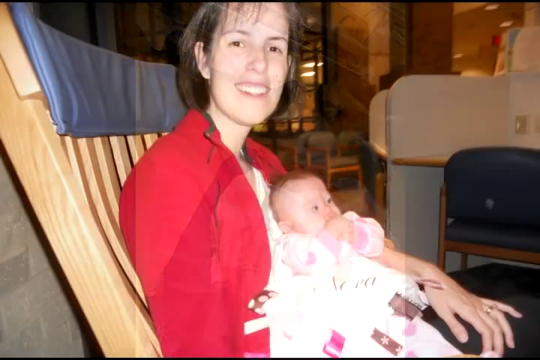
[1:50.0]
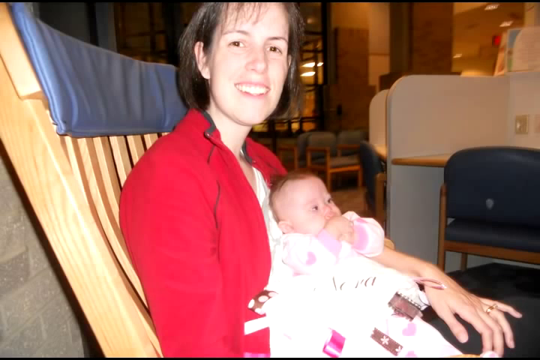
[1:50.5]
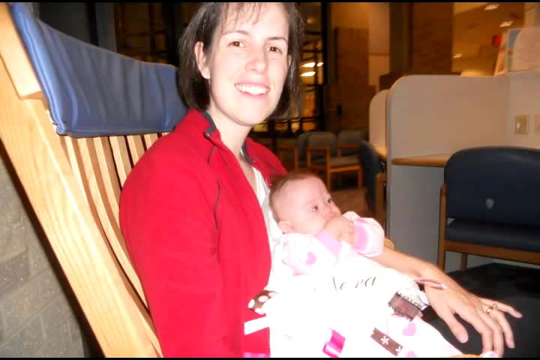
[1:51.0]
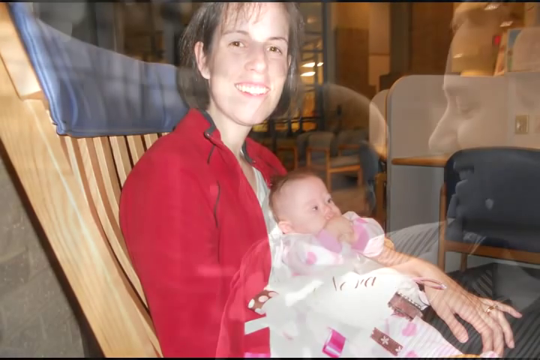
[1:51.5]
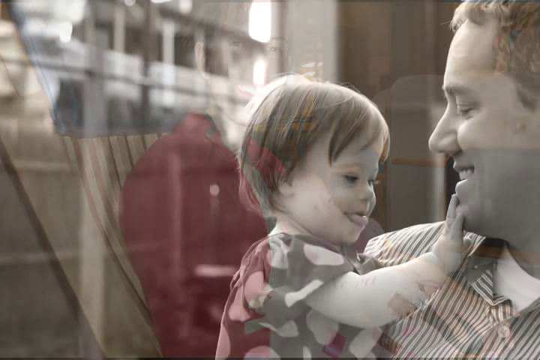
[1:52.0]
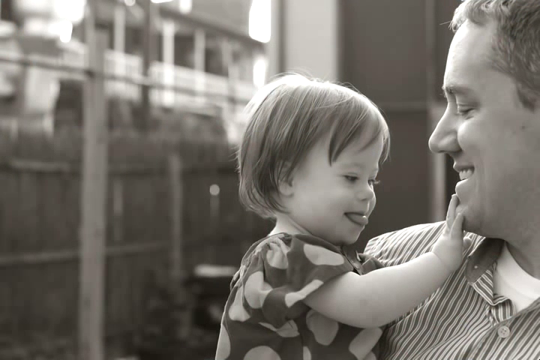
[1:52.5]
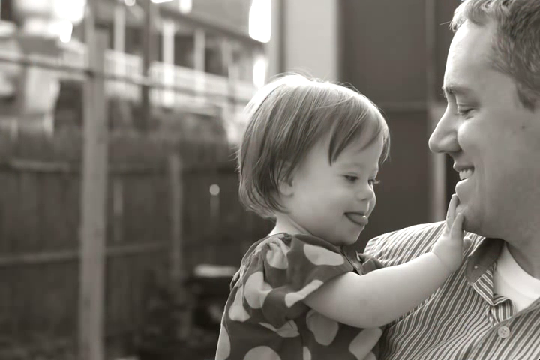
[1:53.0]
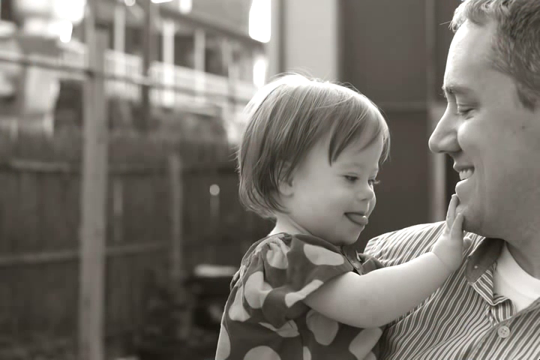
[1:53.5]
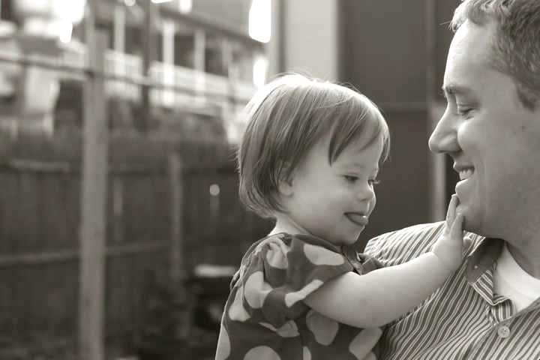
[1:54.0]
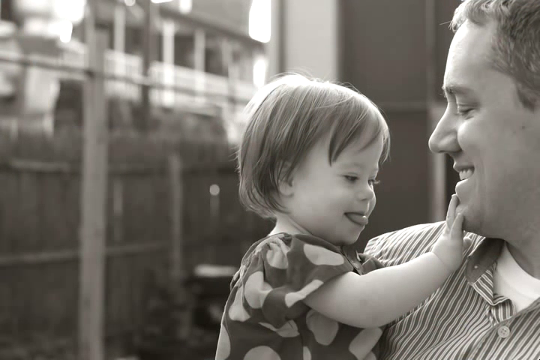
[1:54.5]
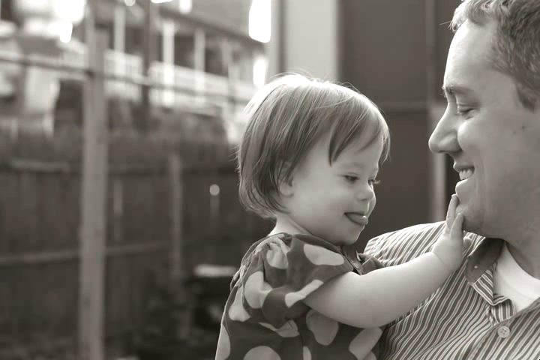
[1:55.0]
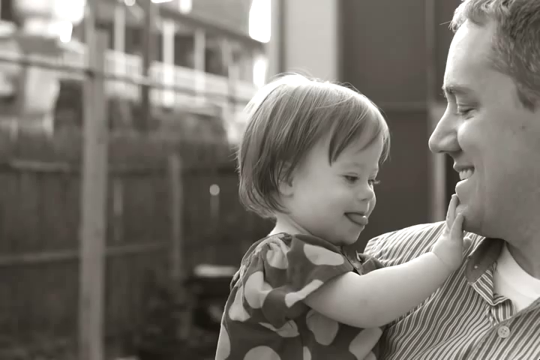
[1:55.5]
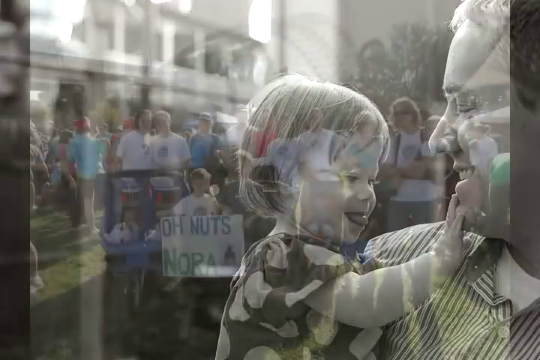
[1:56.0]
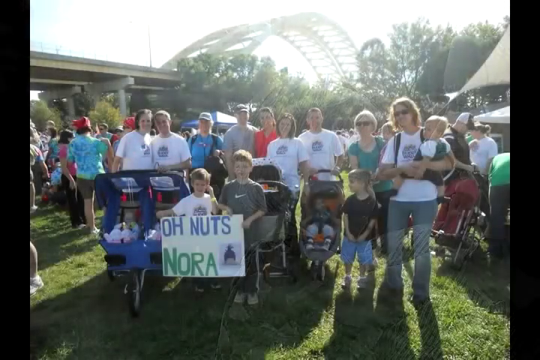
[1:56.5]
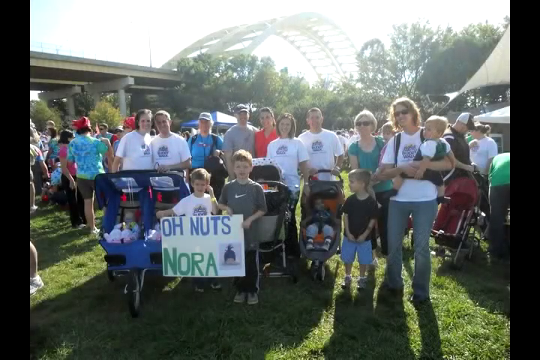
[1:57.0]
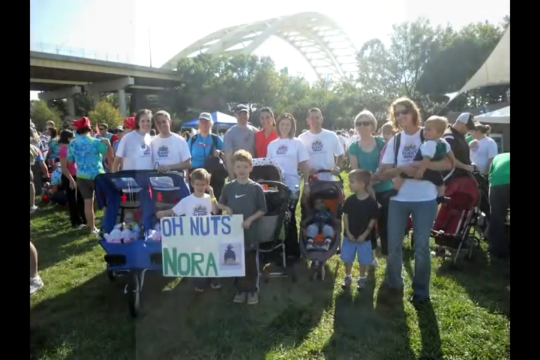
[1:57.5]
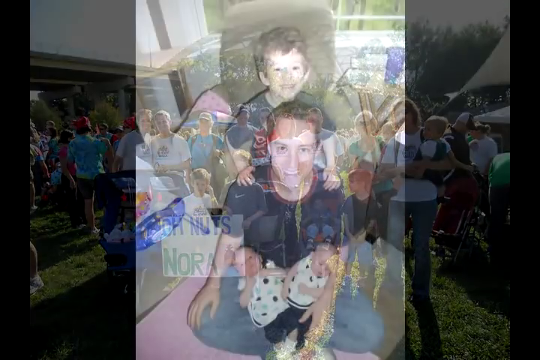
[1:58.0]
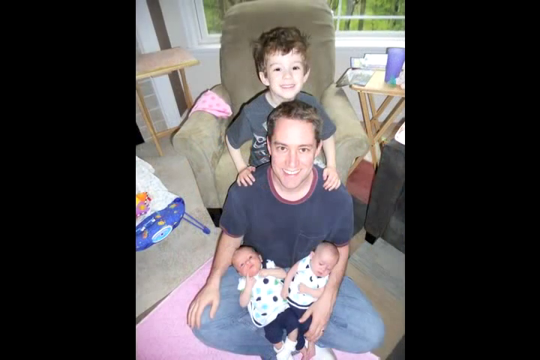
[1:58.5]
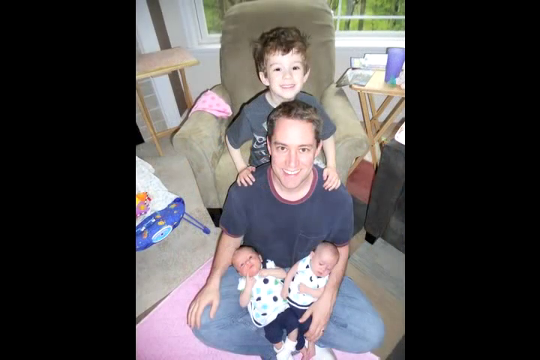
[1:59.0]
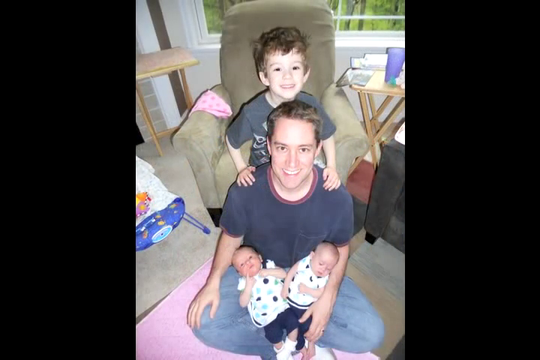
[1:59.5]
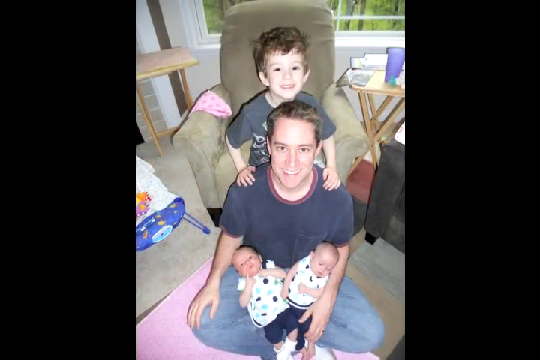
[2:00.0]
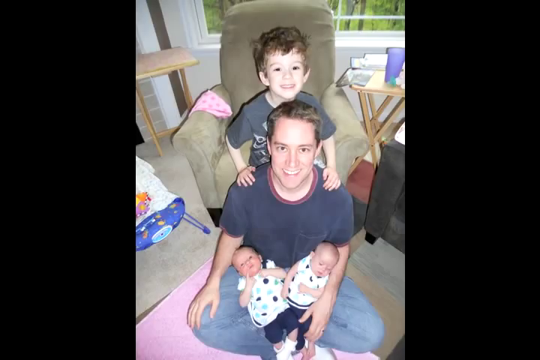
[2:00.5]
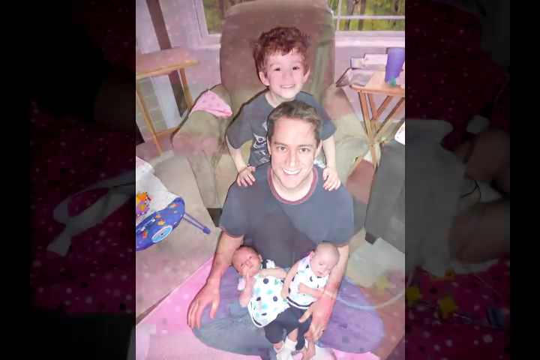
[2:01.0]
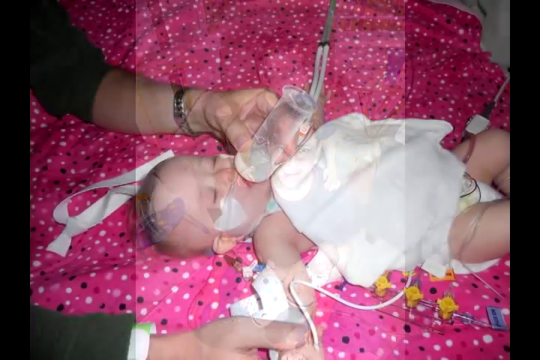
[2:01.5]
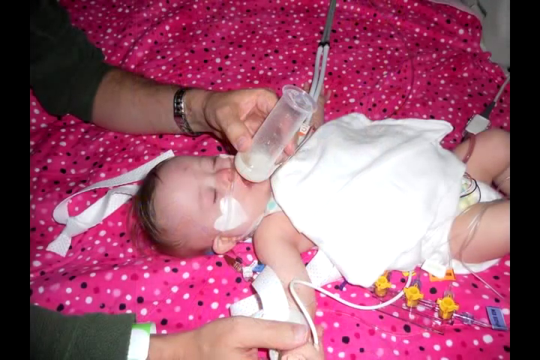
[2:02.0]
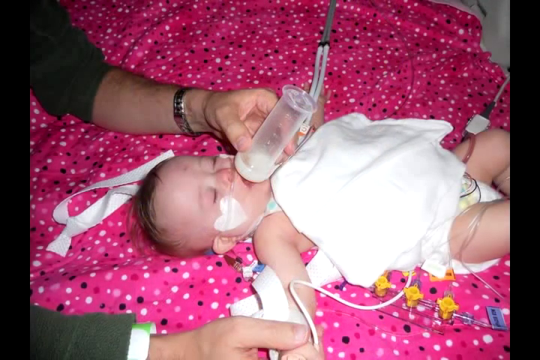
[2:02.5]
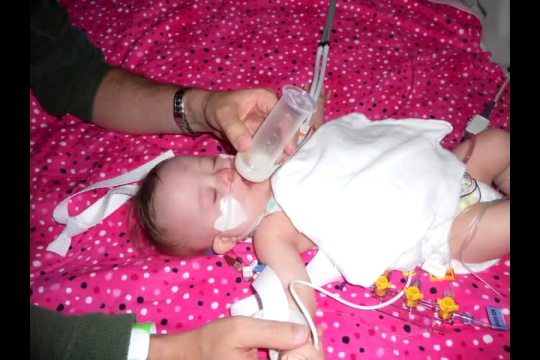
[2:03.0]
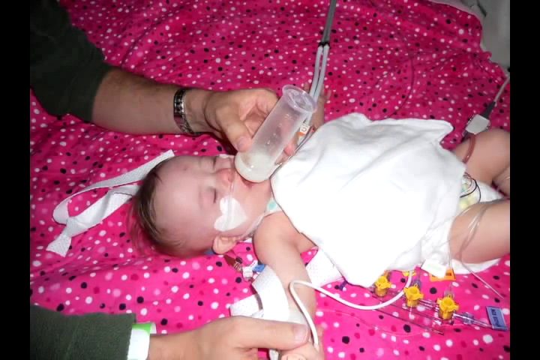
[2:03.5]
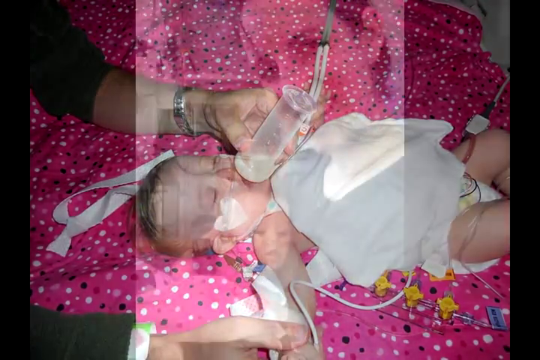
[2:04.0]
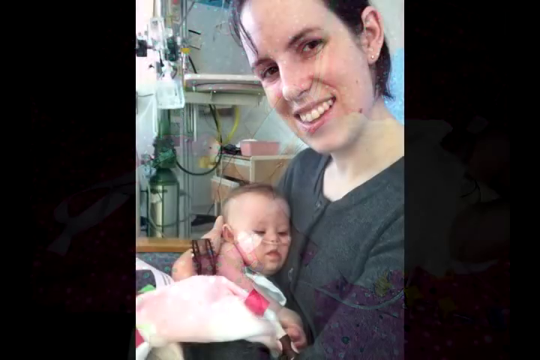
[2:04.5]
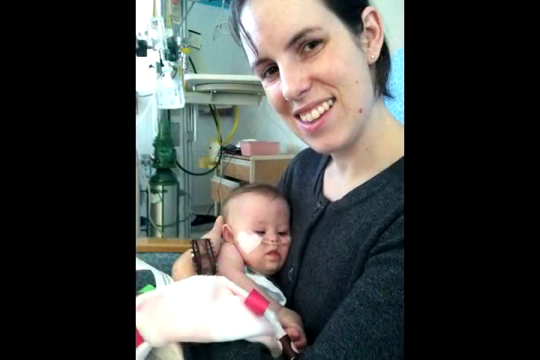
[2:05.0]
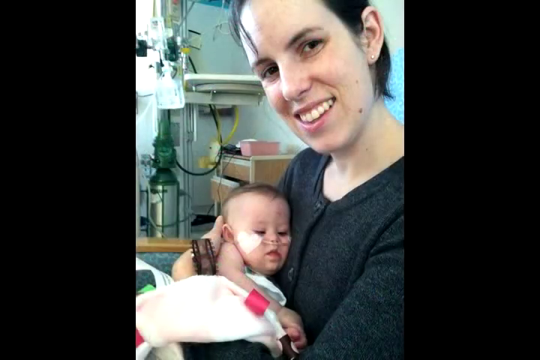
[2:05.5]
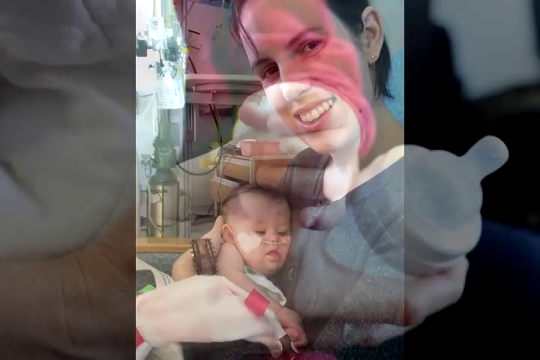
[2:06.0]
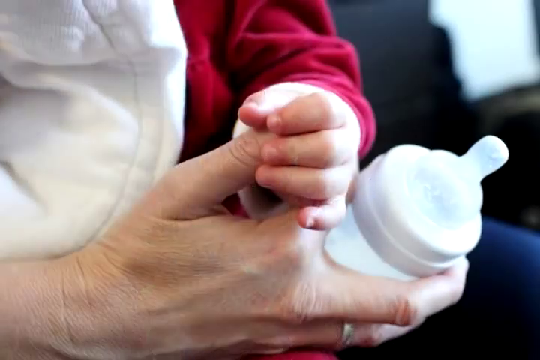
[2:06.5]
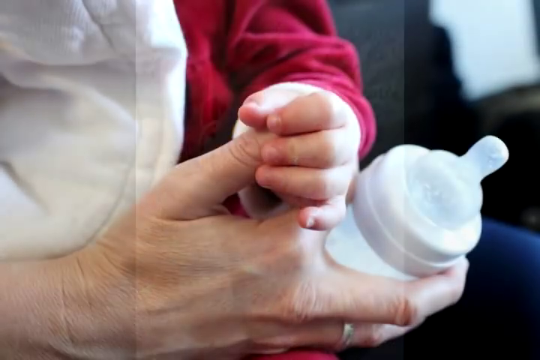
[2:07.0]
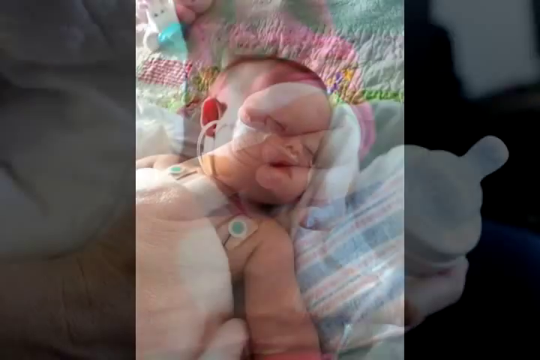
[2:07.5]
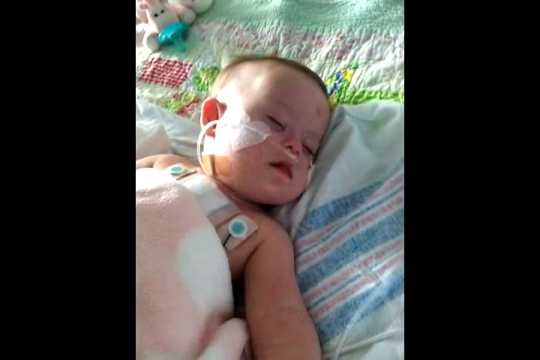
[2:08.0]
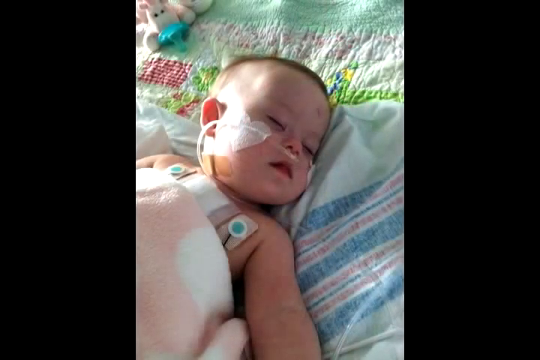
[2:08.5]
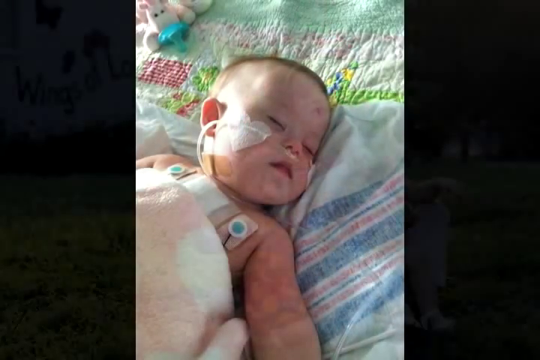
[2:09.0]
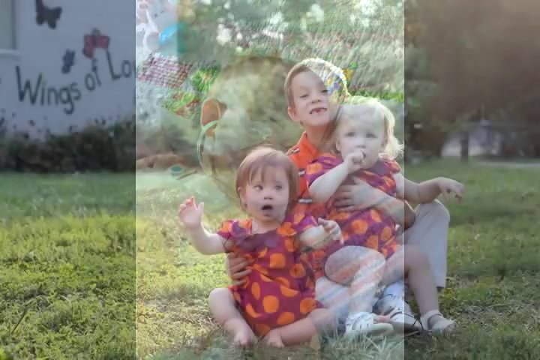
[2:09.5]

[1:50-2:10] The mother sits in a wooden chair with Nora, who has a blanket that says "Nora" on it and wears a little sleeper; the mother has what looks like a red jacket on. Next, a black and white photo shows Nora a little older, looking at her father, both of them smiling, with her little tongue stuck out. Another picture shows what looks like a lot of different people outside, apparently including the brother, with the two babies in their baby seats; he holds a sign that says "Oh Nuts Nora." It looks like some kind of event, maybe to raise money, since the people wear white t-shirts with some kind of emblem on them. A picture follows of the father, his son and his two babies: the son is behind the father, holding onto his shoulders, and the two babies are in the father's lap. Nora is then shown at the hospital, where it looks like someone is feeding her with a bottle; she appears to have some tubes attached. The mother holds Nora at the hospital. In another picture, it looks like Nora is grasping the mother's thumb, with a bottle in her hands. Nora is then shown sleeping with a tube over her nose. Finally, the brother and the two sisters appear in orange polka dot dresses, with butterflies on the wall behind them and the words "wings of love."